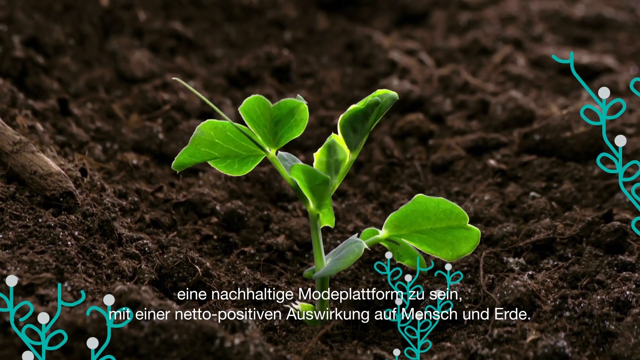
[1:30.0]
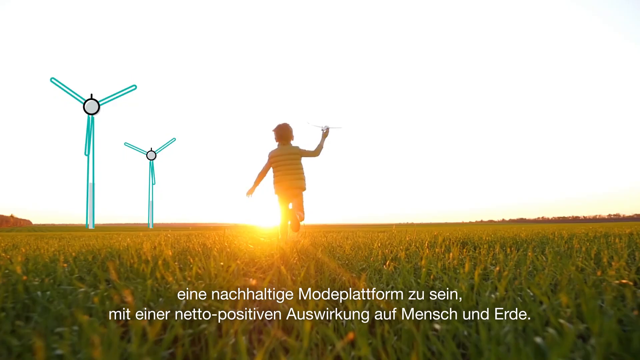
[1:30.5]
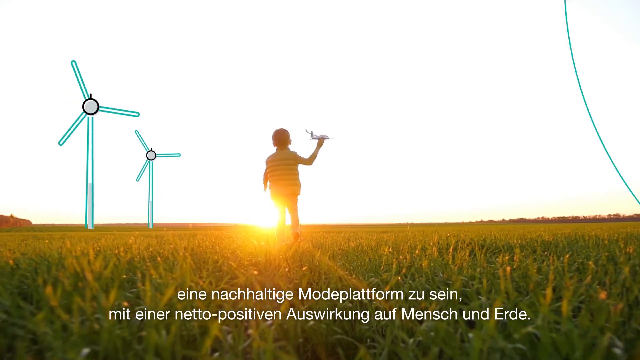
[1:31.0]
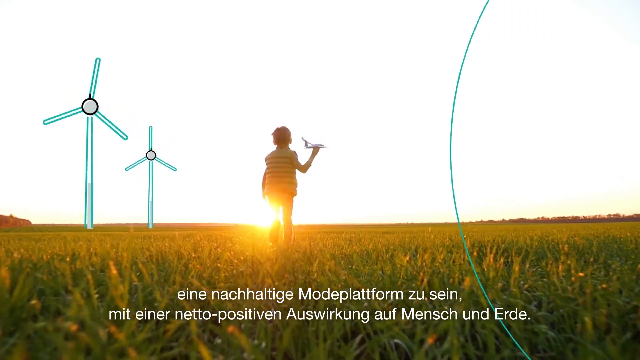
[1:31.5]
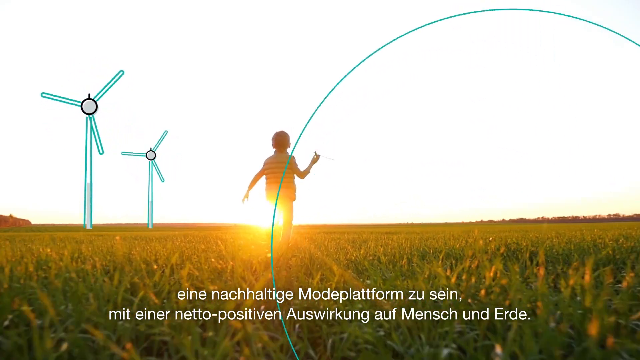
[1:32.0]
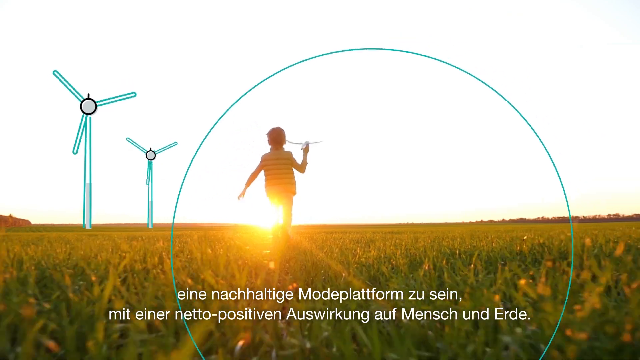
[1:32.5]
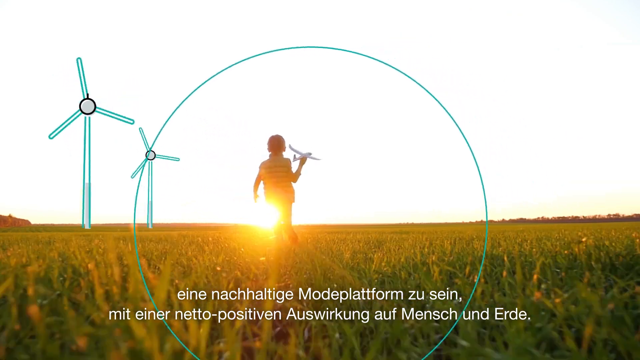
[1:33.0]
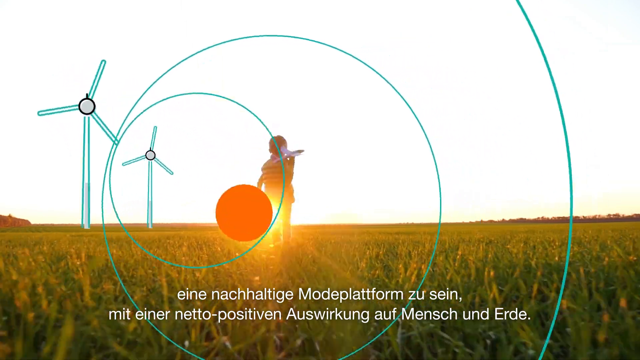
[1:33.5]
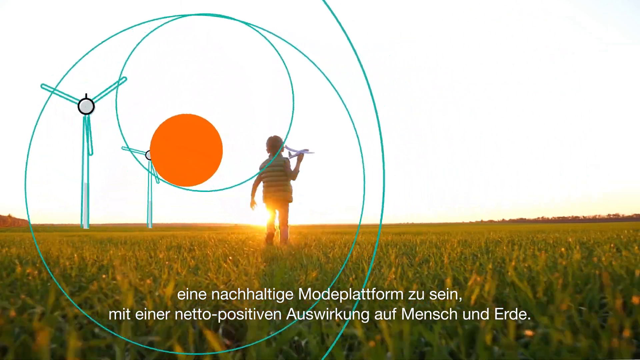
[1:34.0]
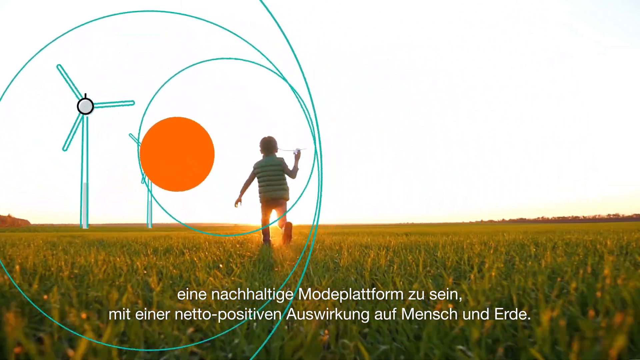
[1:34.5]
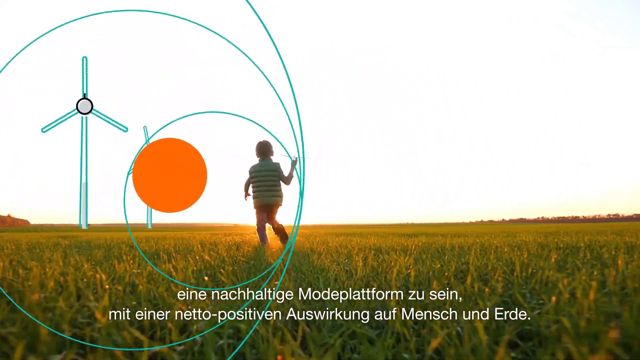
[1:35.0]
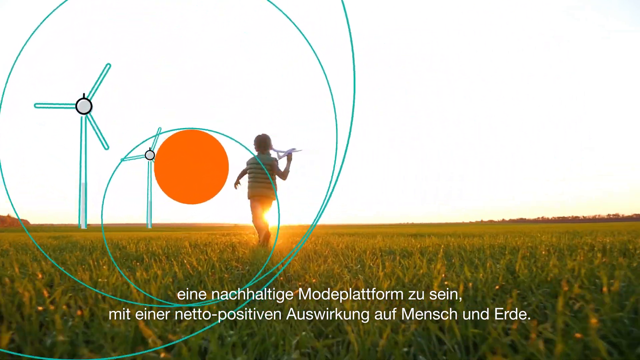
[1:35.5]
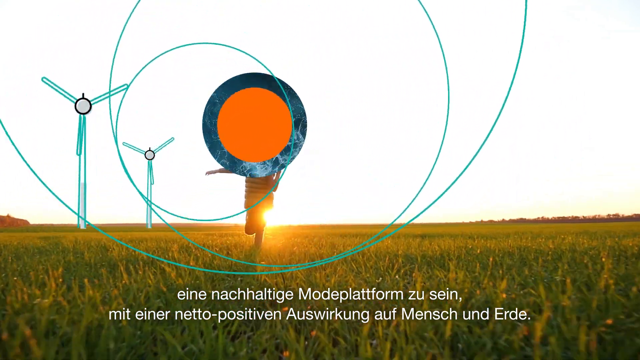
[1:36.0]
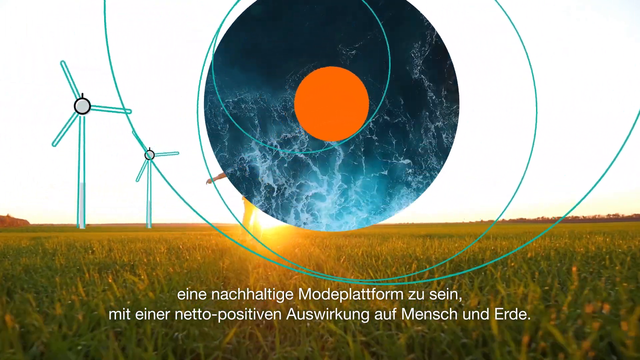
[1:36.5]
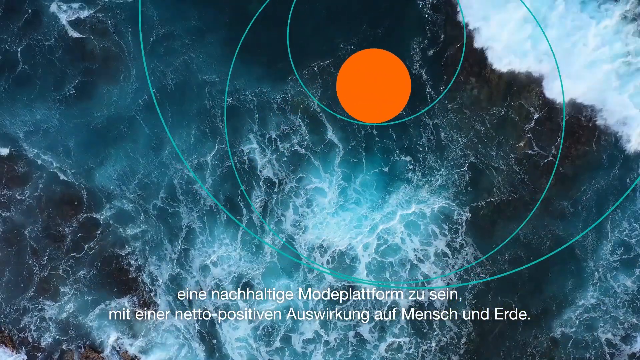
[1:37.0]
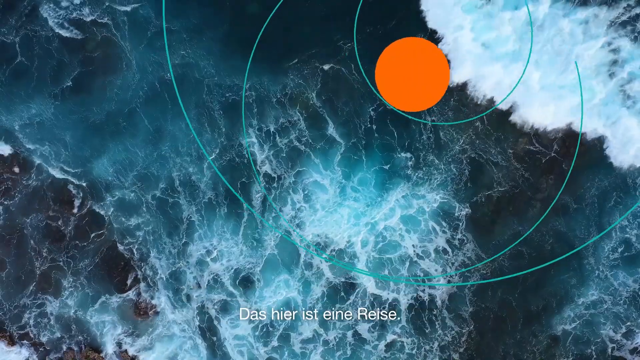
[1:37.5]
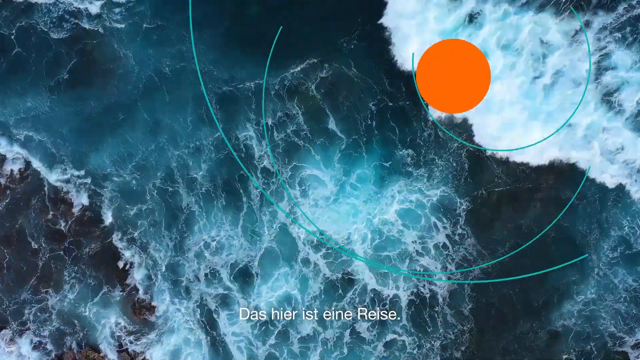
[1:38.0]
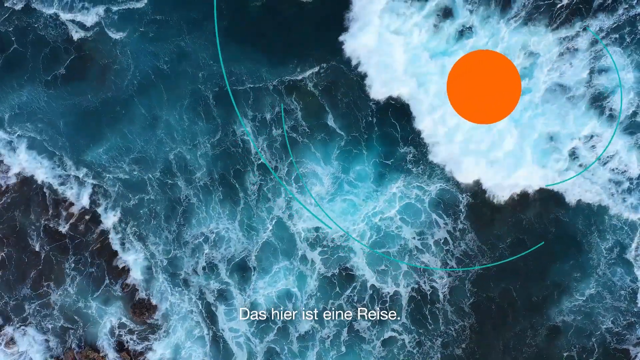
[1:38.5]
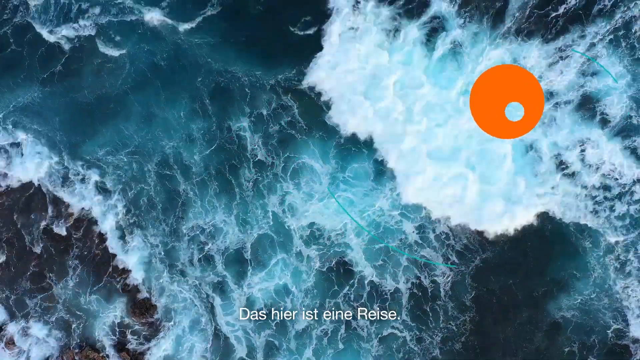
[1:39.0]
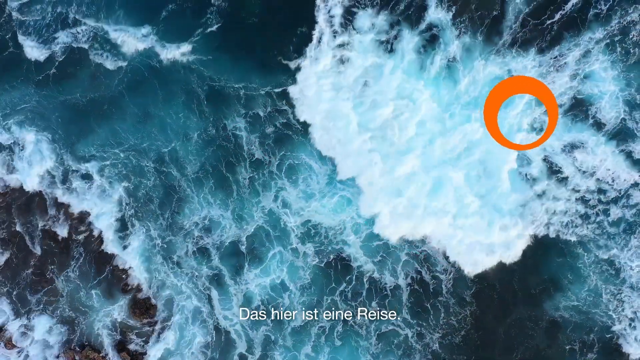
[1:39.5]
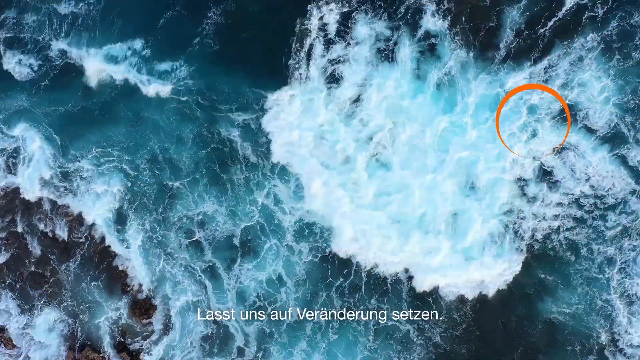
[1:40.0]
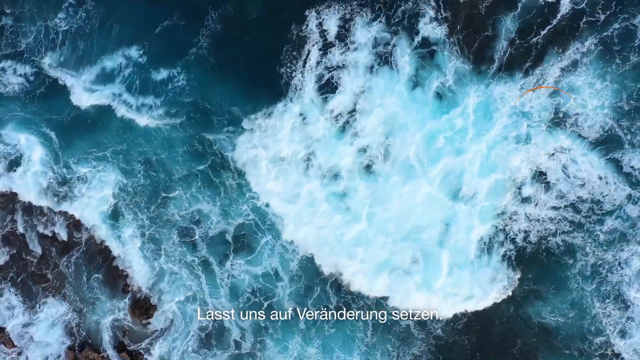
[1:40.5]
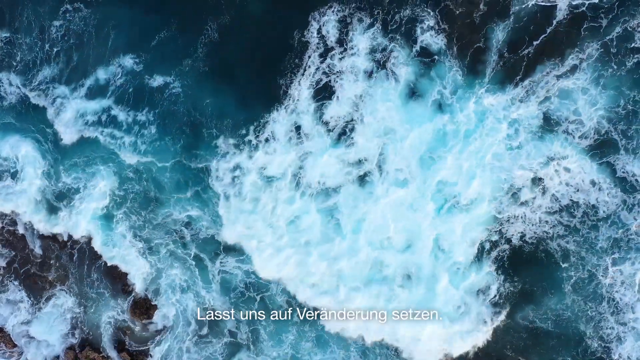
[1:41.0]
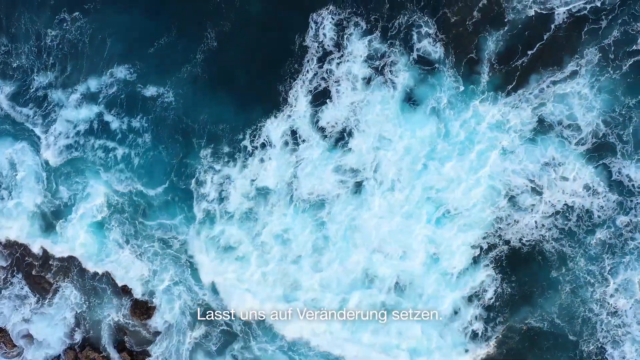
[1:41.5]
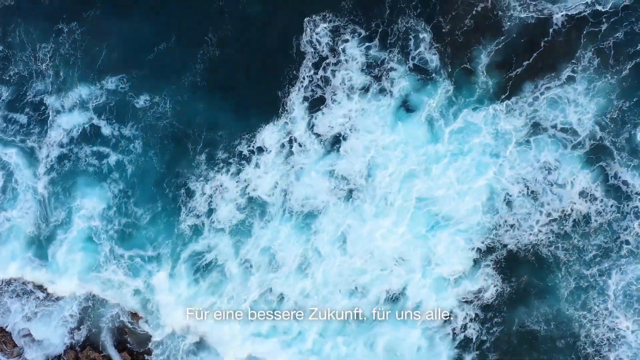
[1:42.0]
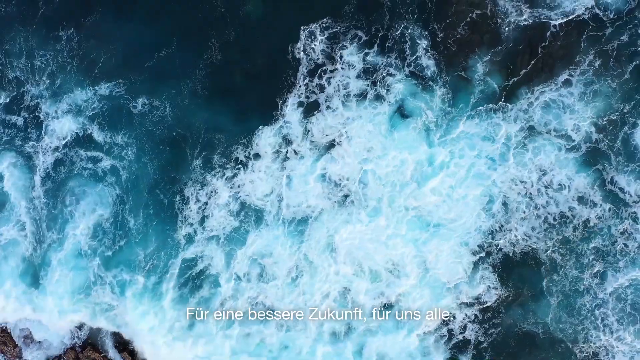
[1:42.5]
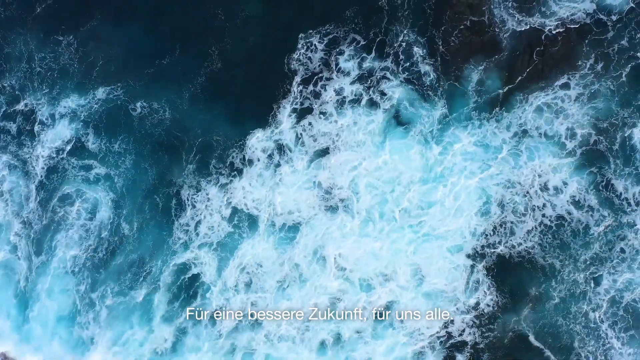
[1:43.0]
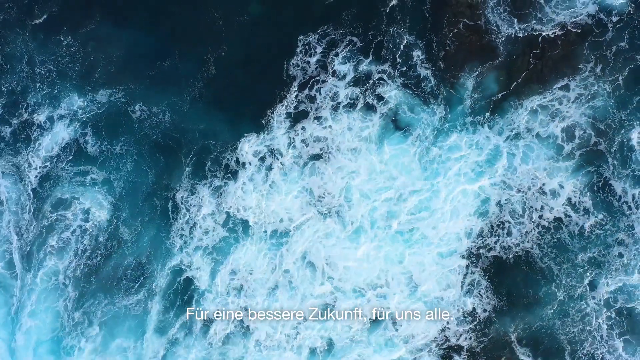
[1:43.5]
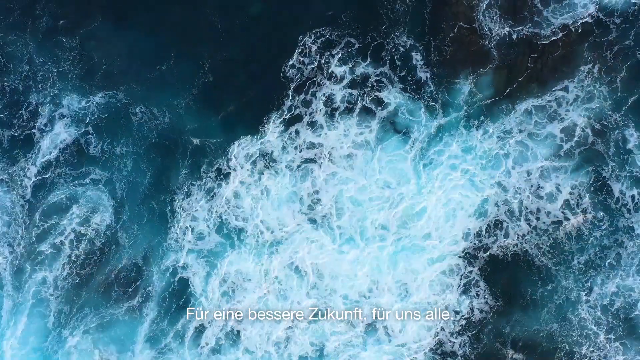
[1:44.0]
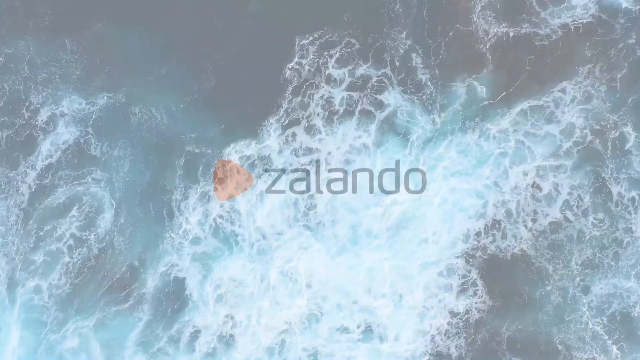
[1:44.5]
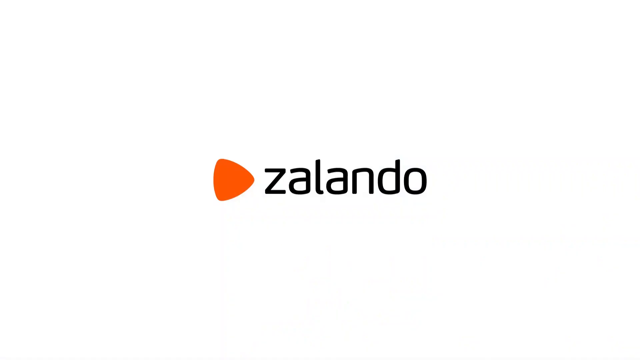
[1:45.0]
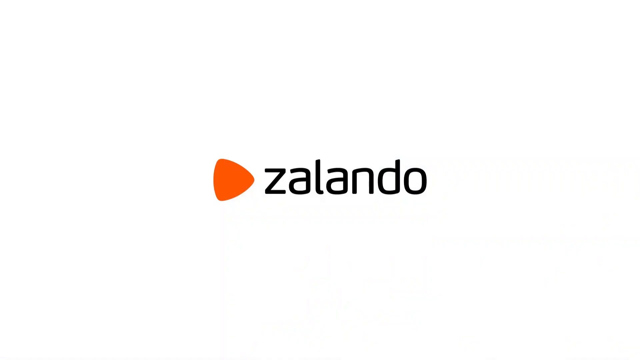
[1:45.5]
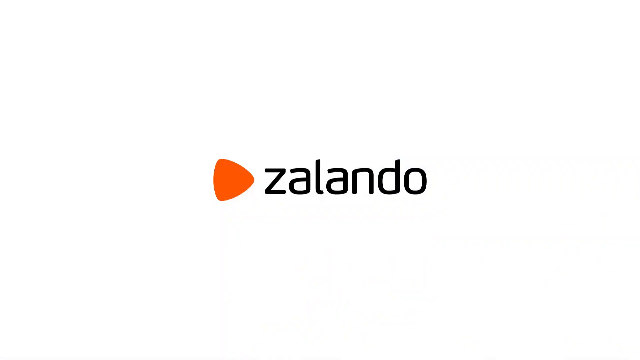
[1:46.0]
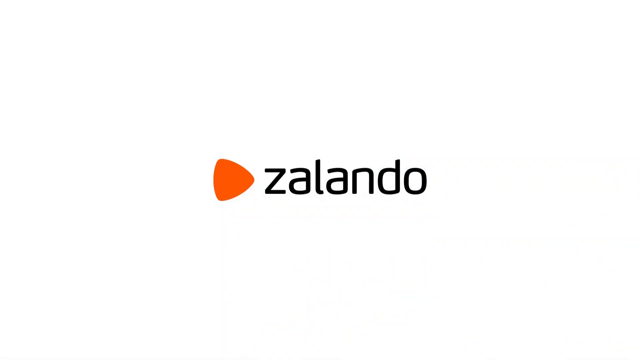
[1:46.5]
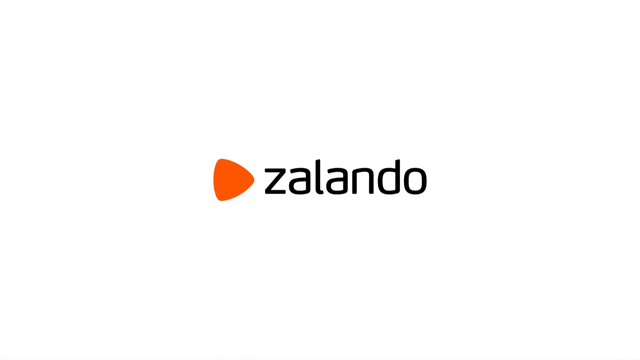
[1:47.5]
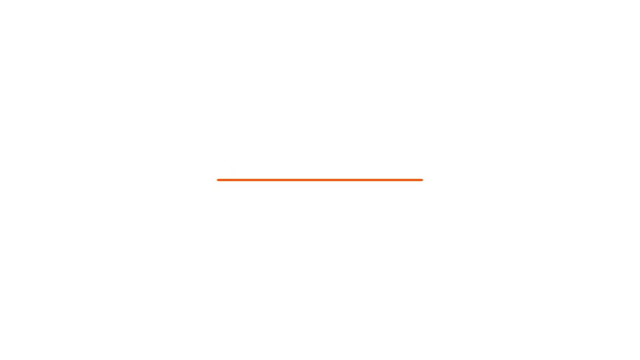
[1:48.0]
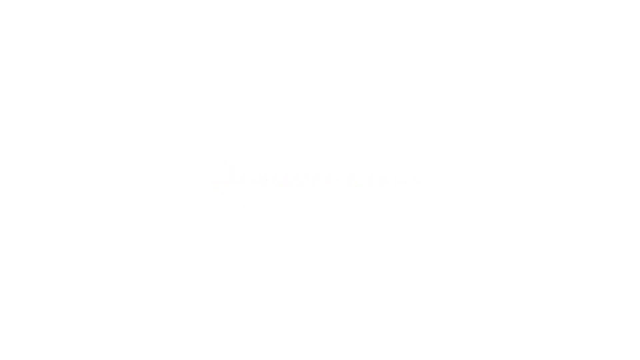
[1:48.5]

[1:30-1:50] Text in English appears on the screen, then the video transitions back to the kind of starting screen showing an aerial view of the ocean. A male figure is shown running with a kind of plane in his hand in a sort of sunset setting, with no other figures present. Before the video ends, a background with the word "Zalando" on it appears.